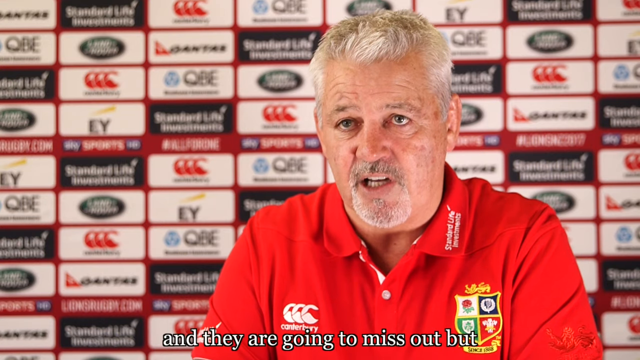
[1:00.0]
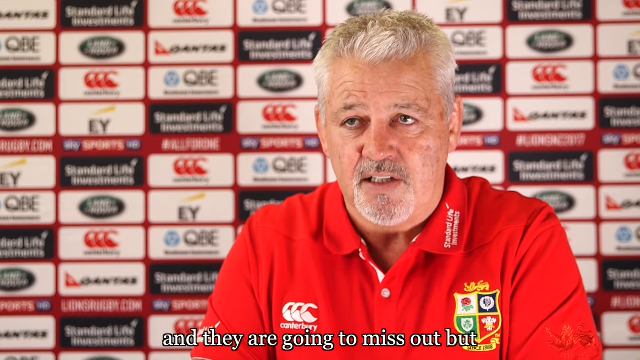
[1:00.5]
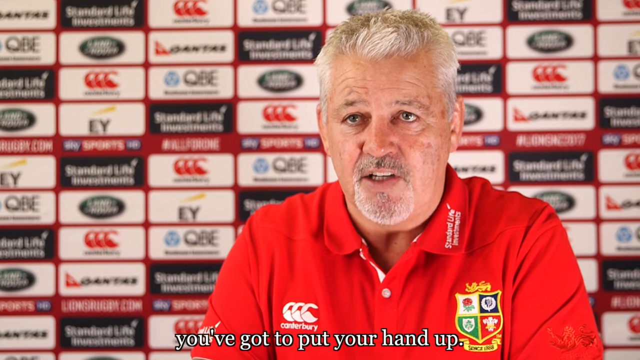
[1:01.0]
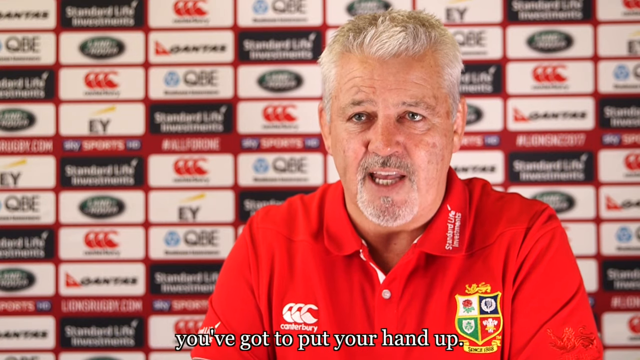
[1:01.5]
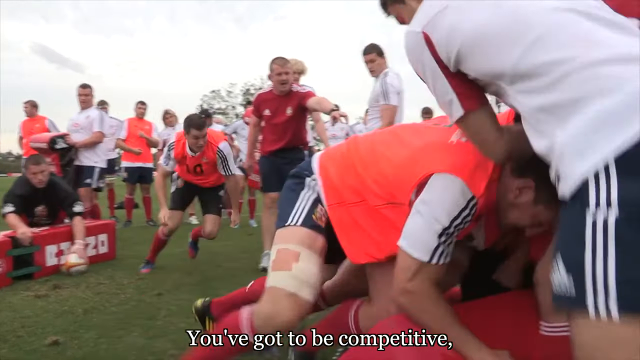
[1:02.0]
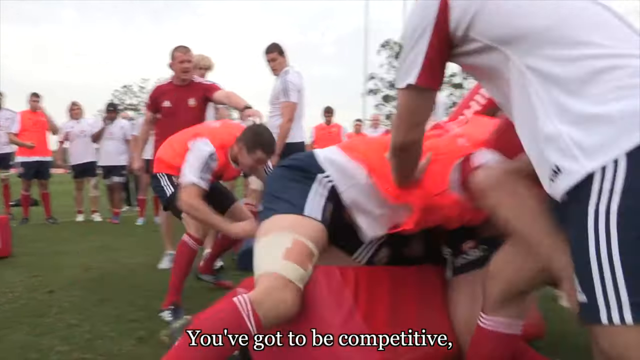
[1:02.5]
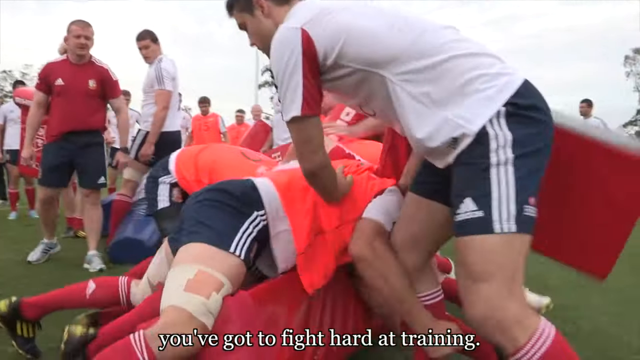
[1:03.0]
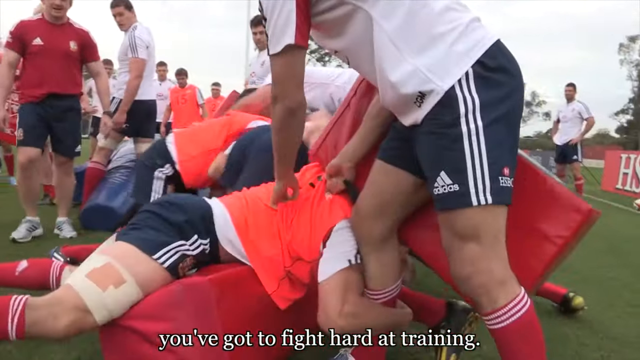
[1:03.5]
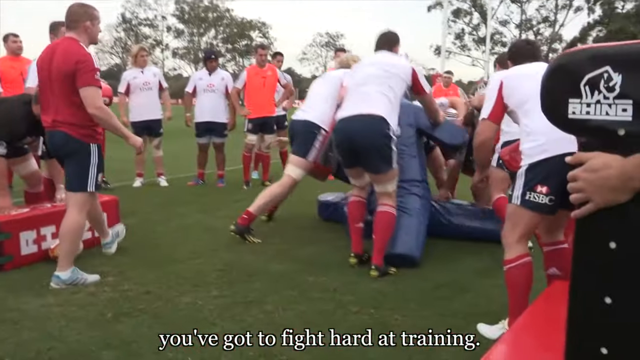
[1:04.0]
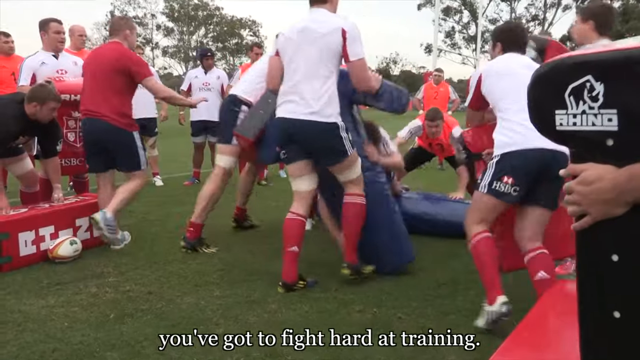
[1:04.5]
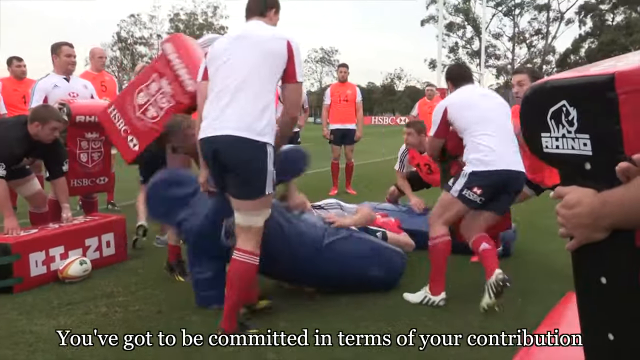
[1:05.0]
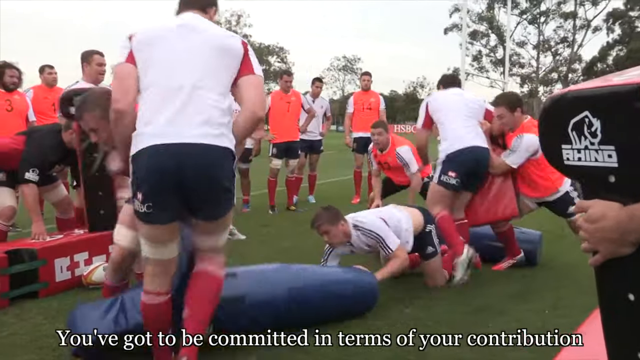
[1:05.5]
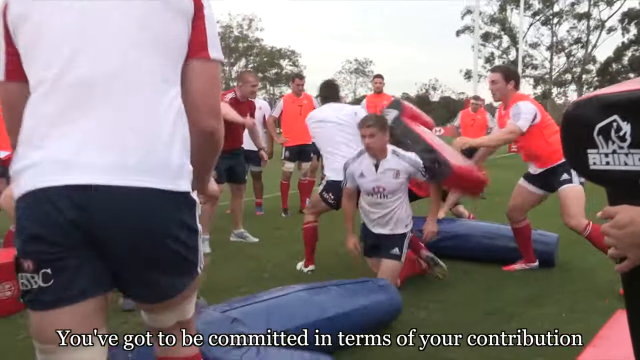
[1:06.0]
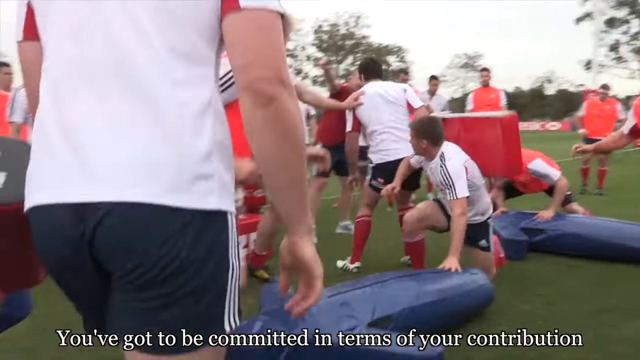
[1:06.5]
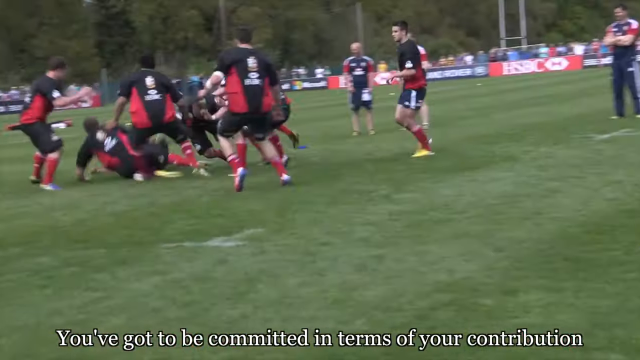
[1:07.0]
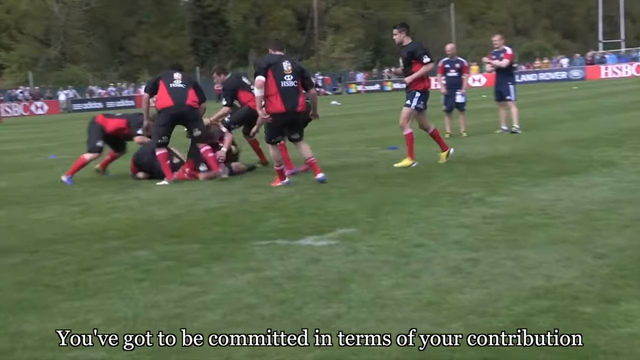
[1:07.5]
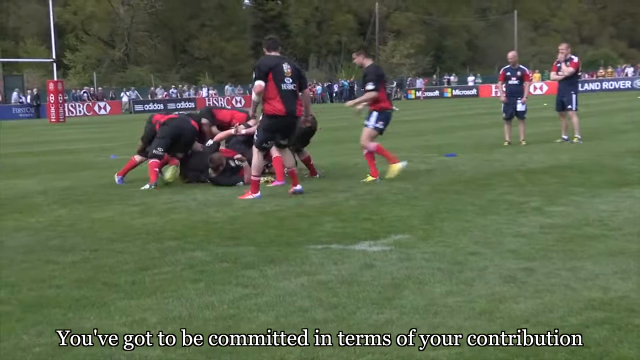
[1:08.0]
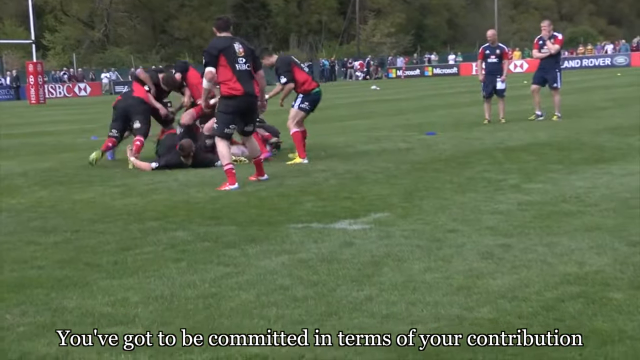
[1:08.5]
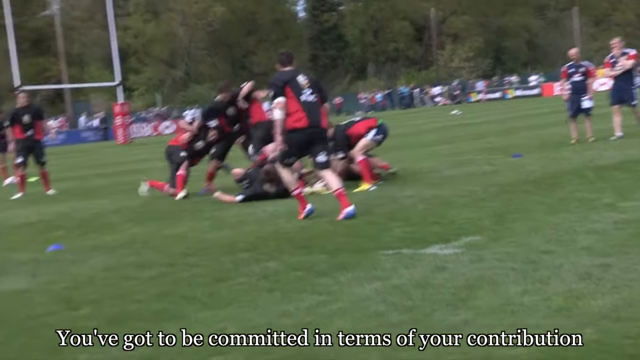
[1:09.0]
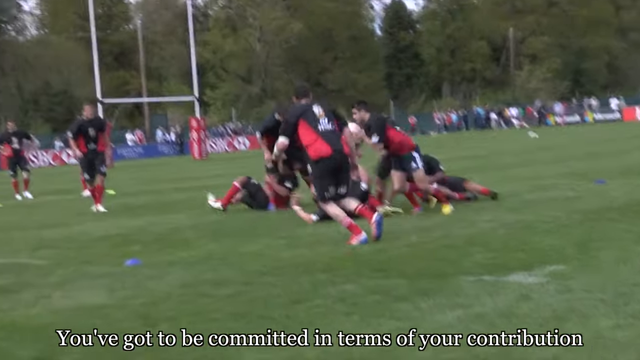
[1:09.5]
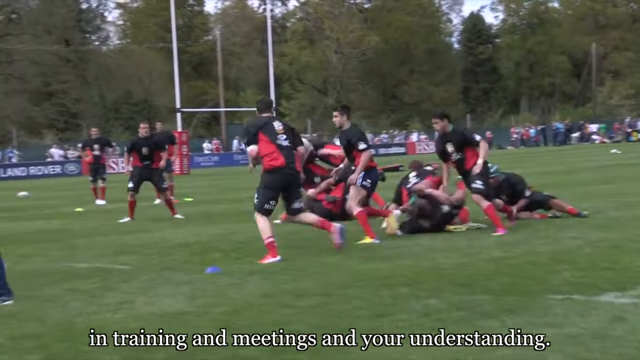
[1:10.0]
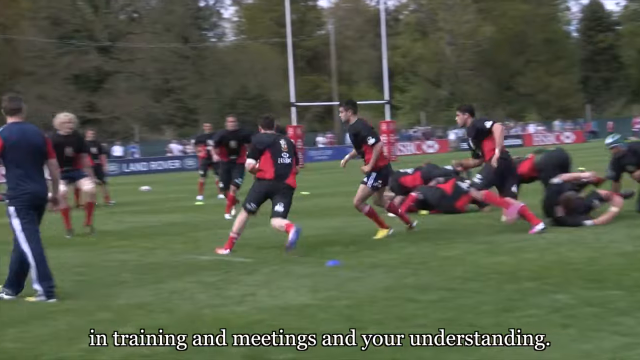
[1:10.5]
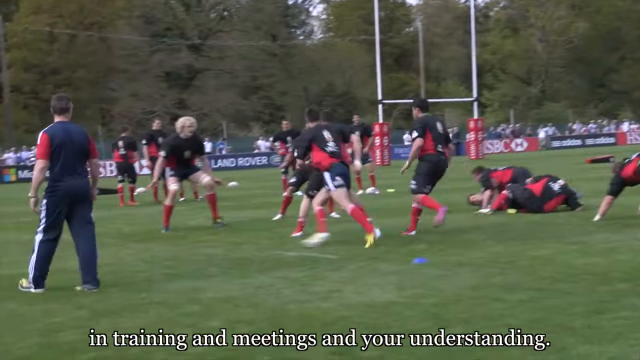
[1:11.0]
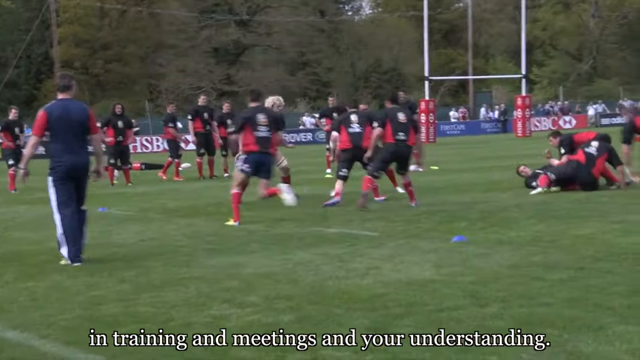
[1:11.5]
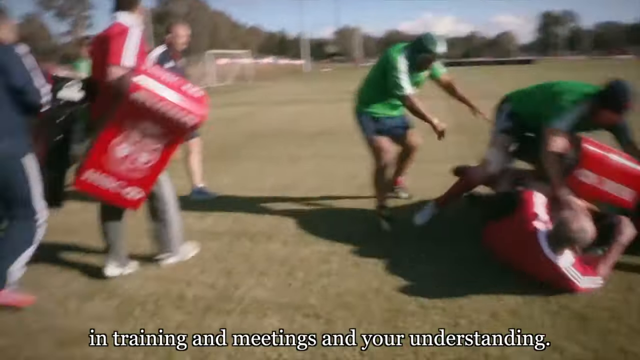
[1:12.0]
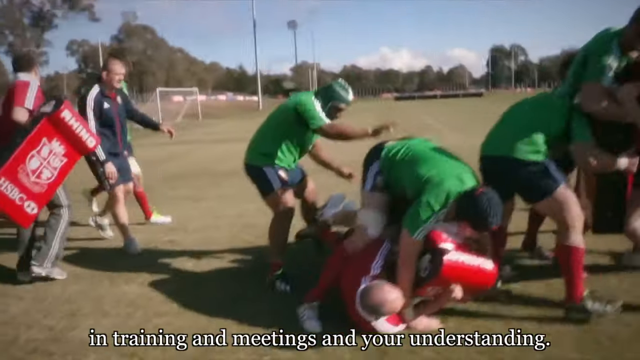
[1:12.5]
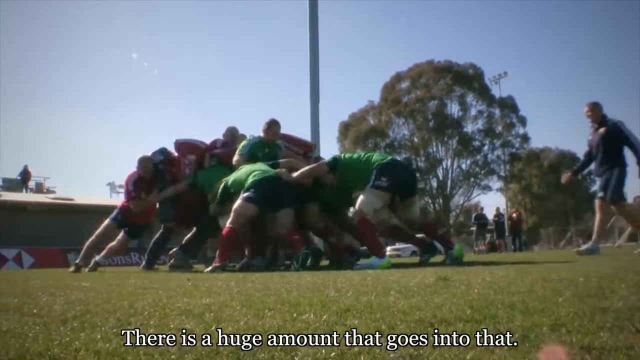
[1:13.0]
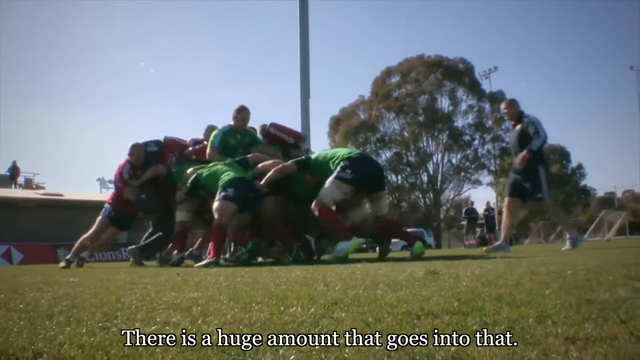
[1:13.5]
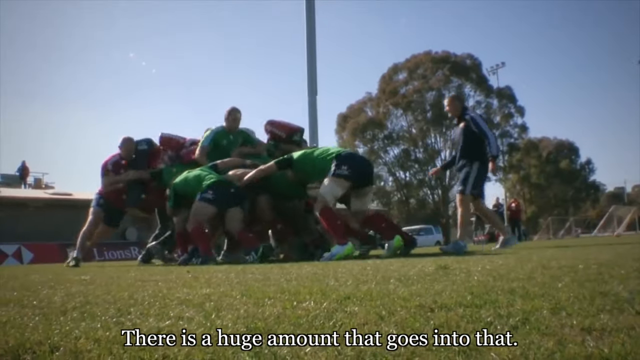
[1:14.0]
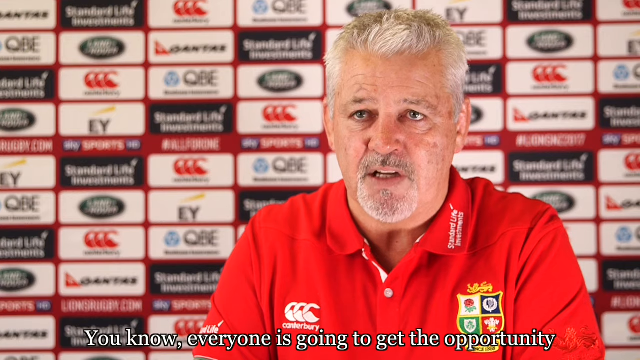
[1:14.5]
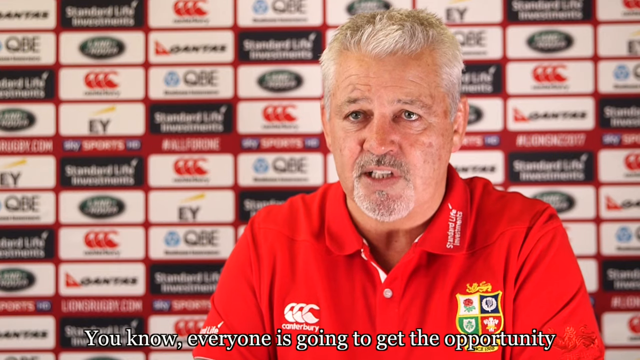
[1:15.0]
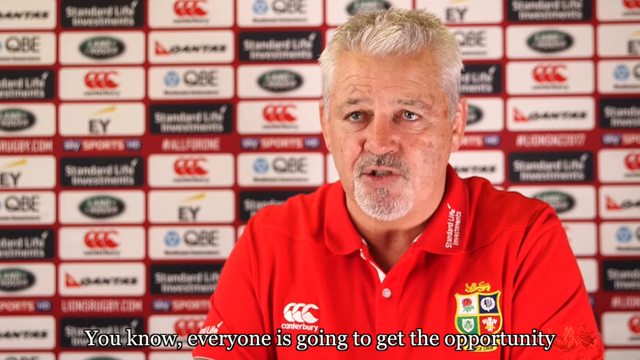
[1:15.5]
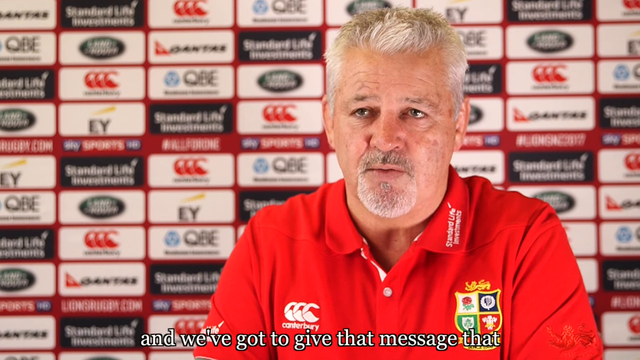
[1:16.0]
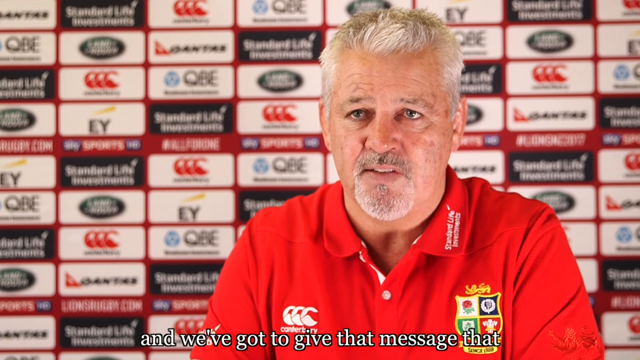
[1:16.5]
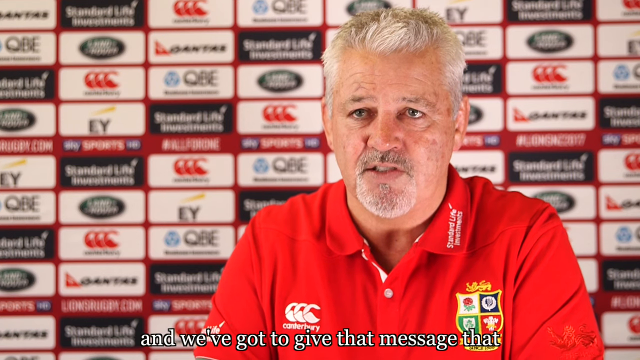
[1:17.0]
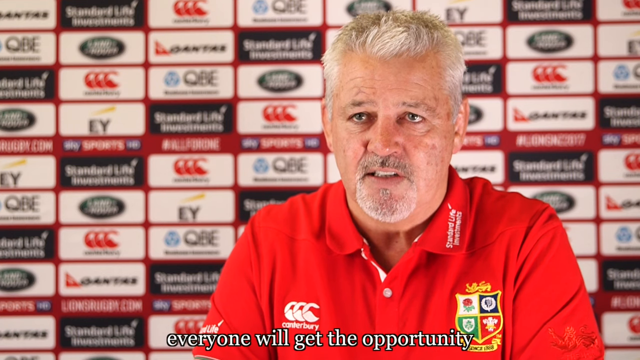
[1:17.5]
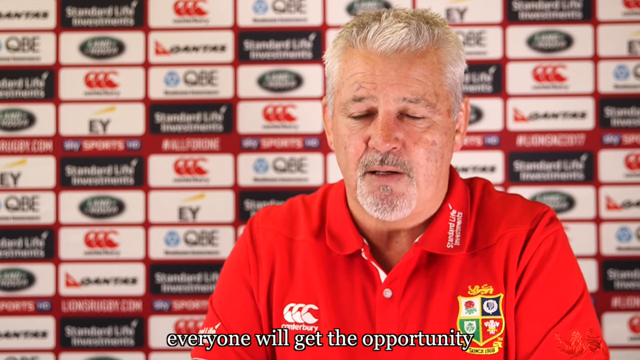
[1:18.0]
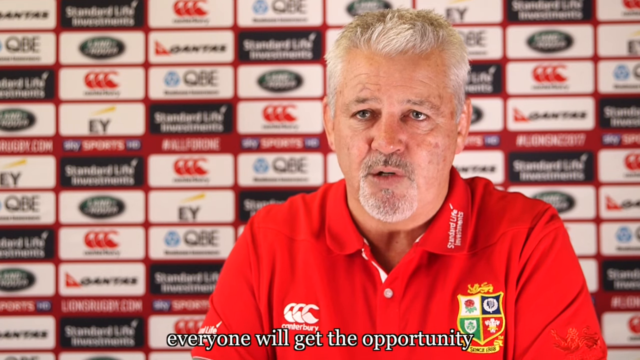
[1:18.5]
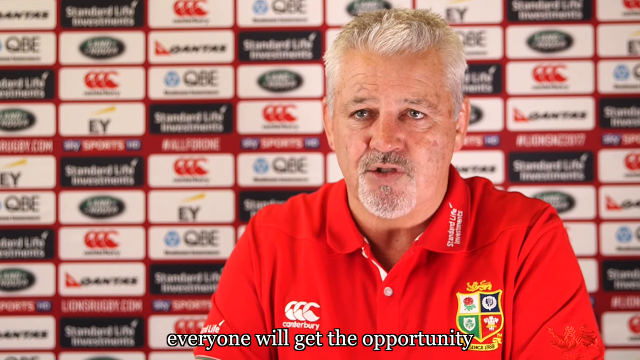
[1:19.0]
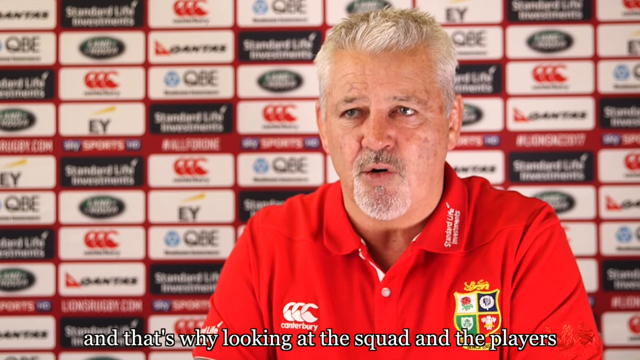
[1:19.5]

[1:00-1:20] Rugby players are shown tackling each other during training, with many people in the shot. The scene cuts back to the middle-aged man, who appears to be in his late 50s to late 60s, with grey, whitish-greyish hair, speaking from the same seat.